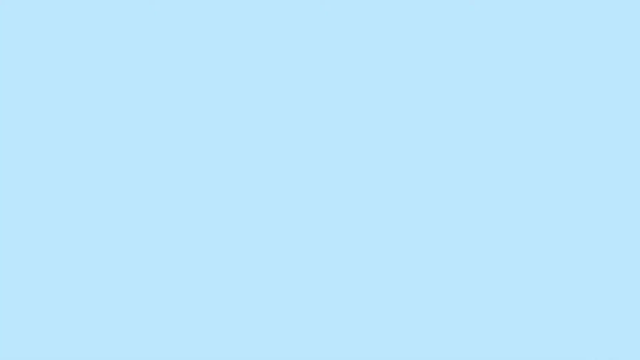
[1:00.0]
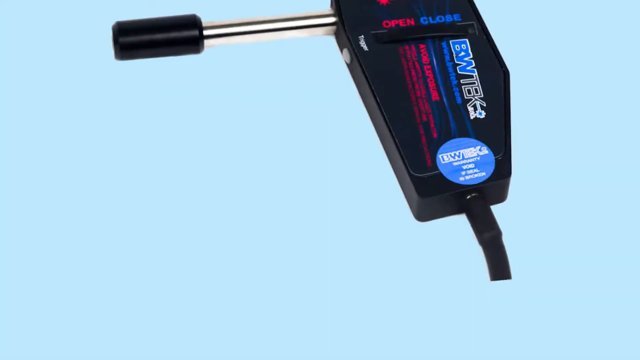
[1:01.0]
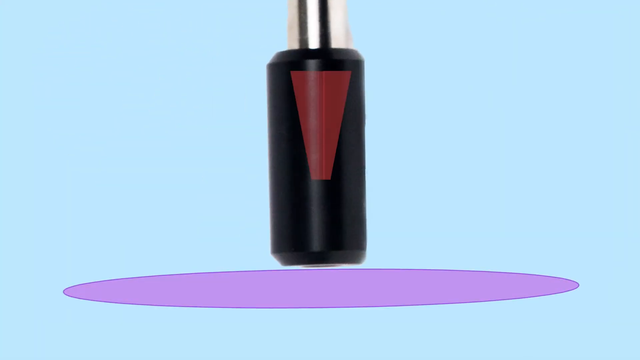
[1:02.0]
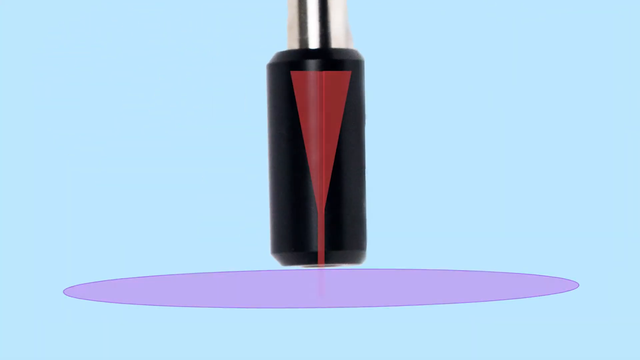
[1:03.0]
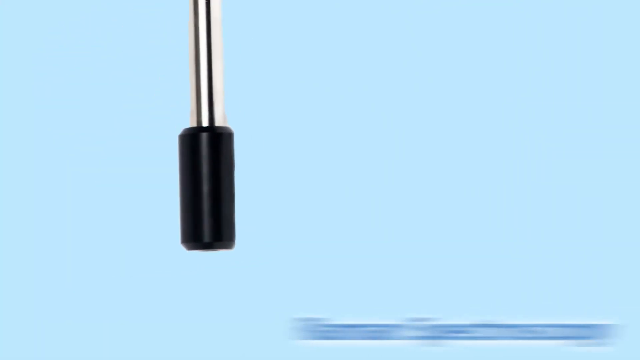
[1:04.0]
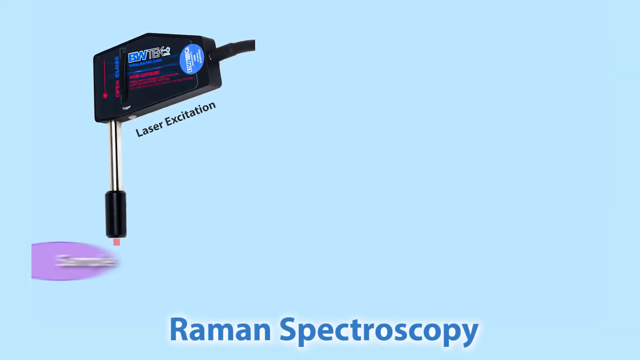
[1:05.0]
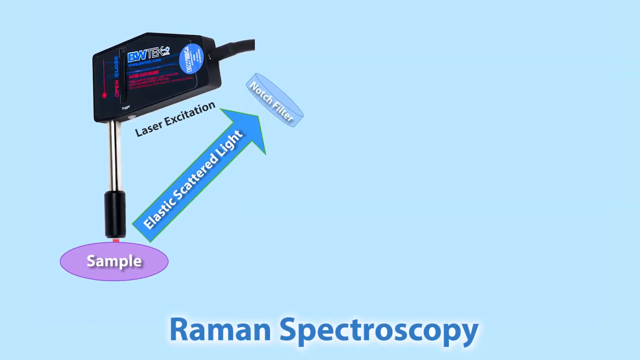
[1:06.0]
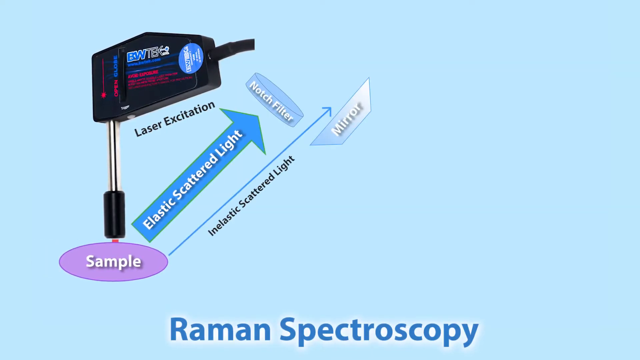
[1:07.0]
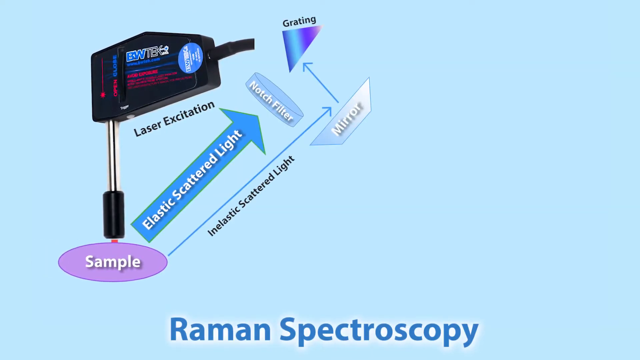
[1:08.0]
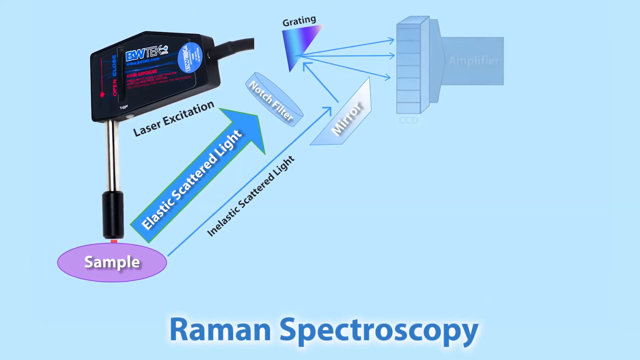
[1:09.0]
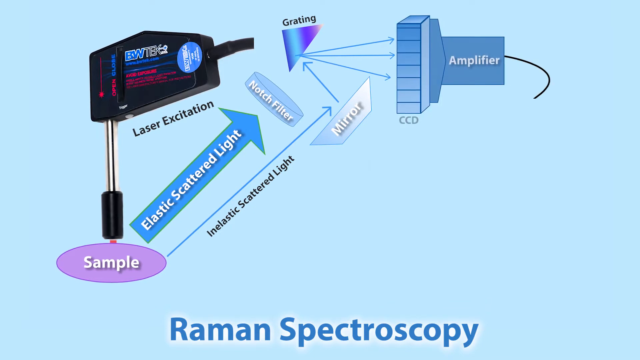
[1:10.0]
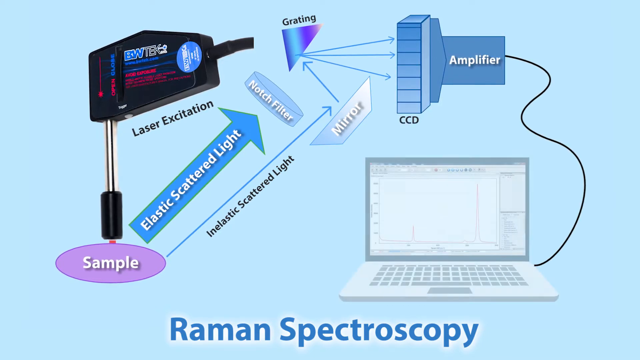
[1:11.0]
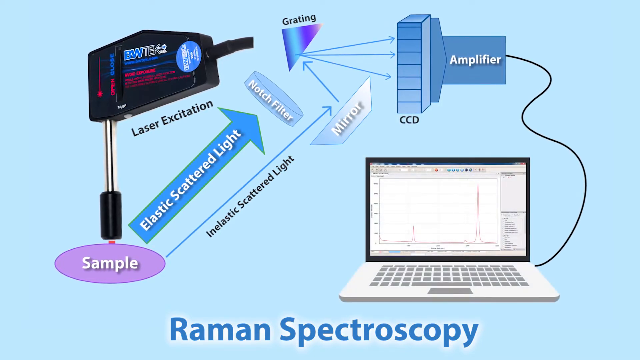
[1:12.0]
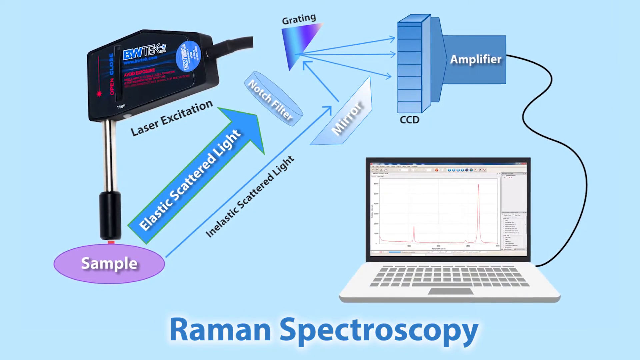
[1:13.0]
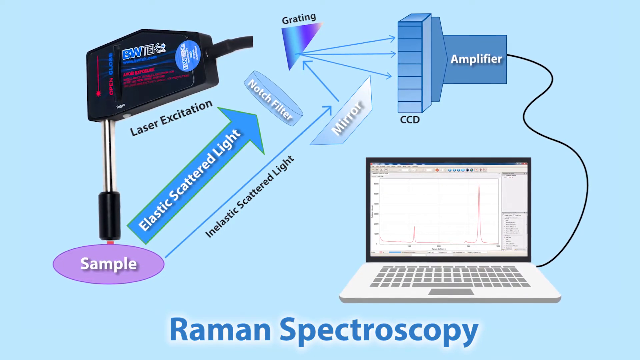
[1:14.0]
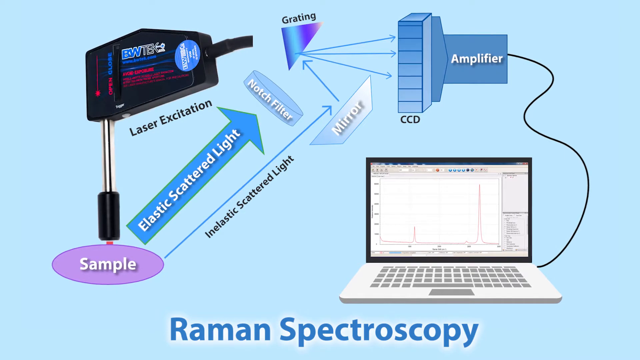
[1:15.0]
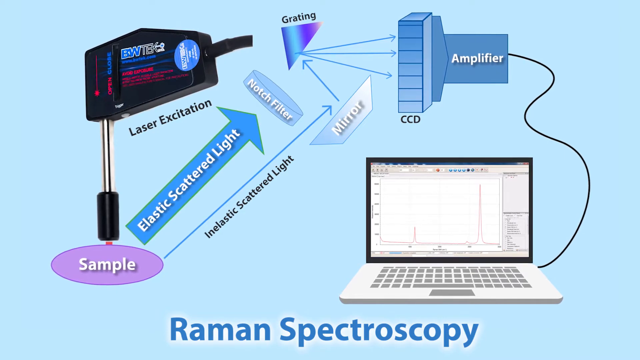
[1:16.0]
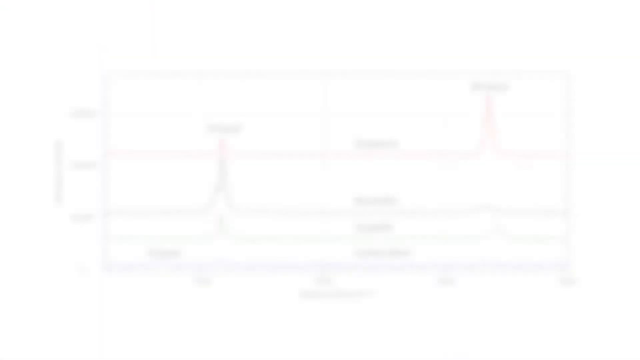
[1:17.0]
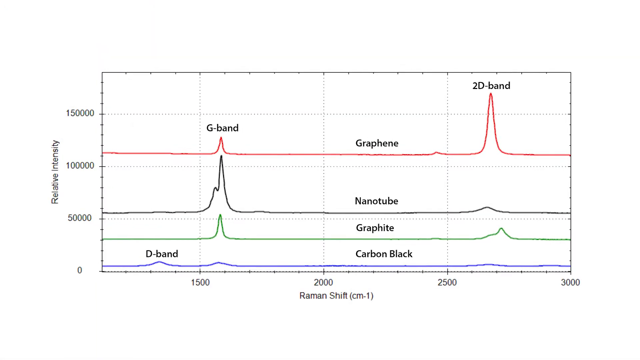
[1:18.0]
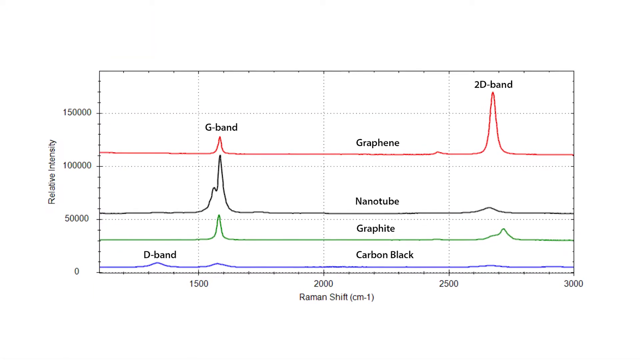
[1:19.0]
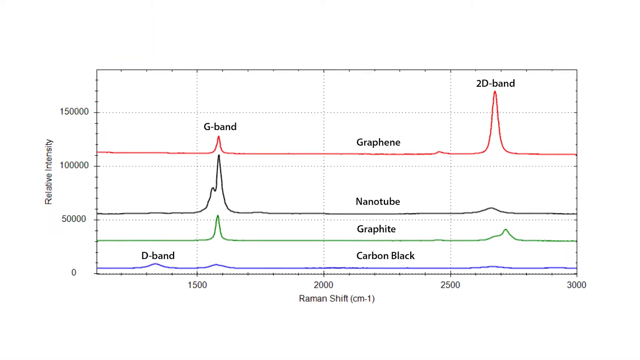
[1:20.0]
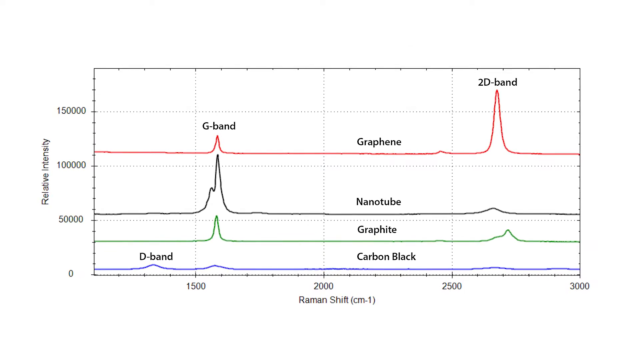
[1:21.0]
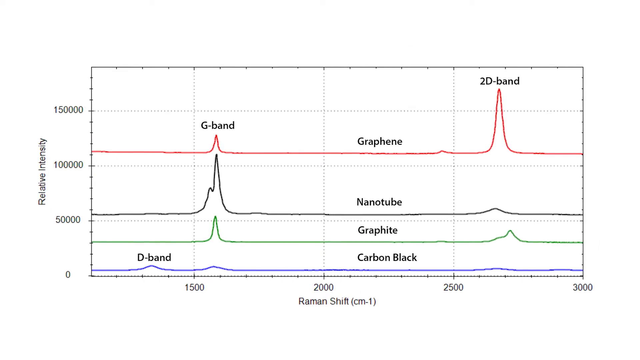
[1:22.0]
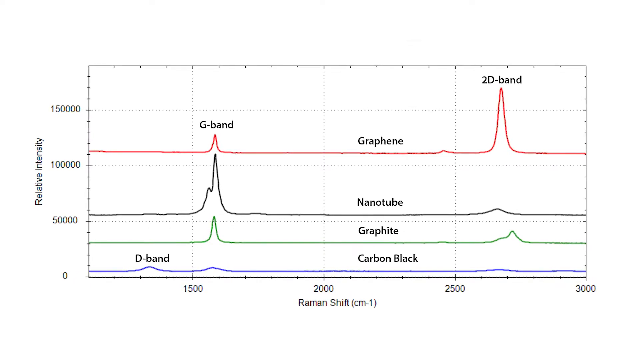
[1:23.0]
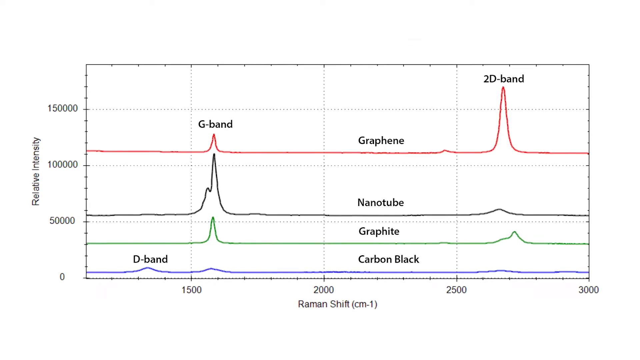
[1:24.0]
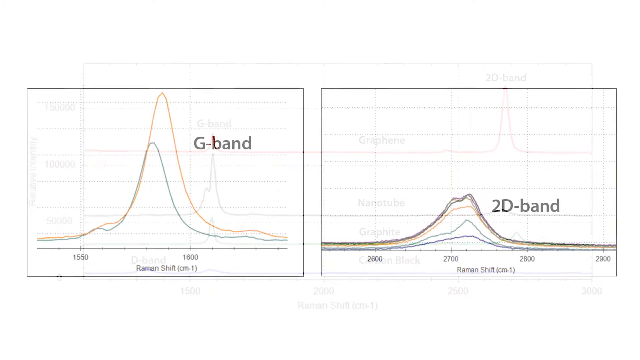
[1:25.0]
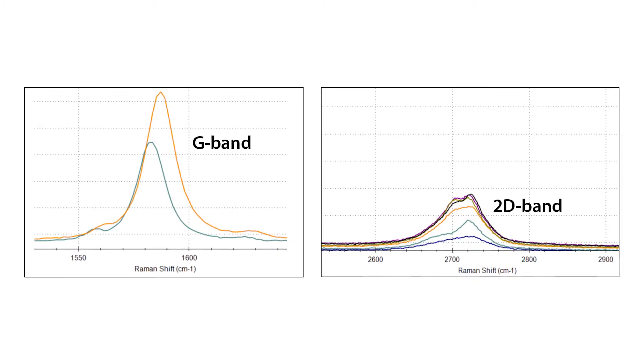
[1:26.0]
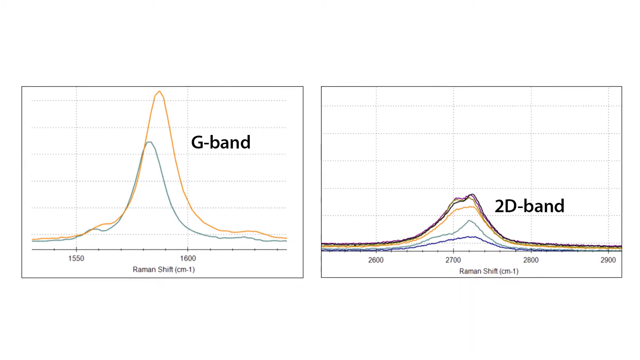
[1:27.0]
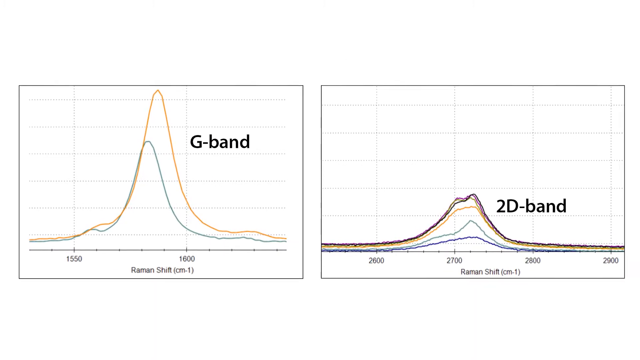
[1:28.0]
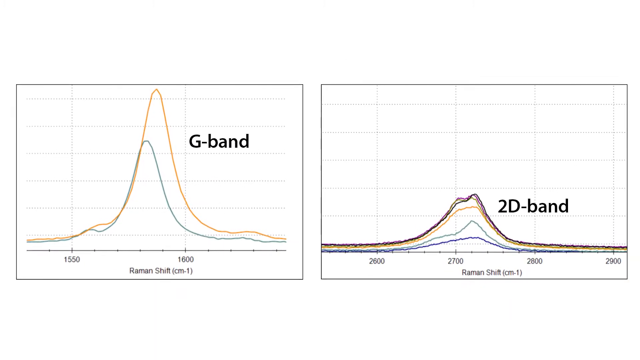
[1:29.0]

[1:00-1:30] A black object appears on a light blue background, with a flat purple circle effect below, and then a black cylinder at the edge of the machine. Text reads "laser excitation", and a diagram follows. Its labels include "sample"; a blue arrow labeled "elastic scattered light"; "notch filter" above that; "inelastic scattered light" below; and finally "mirror". Then comes "grating amplifier", after which a black line leads to a laptop-generated image. Next, a graph shows lines that are, from top to bottom, red, black, green and blue. The y-axis reads "relative intensity" and the label below reads "Raman shift"; the numbers running vertically on the left side go from 0 to 150,000, and those on the right side from 0 to 3,000.